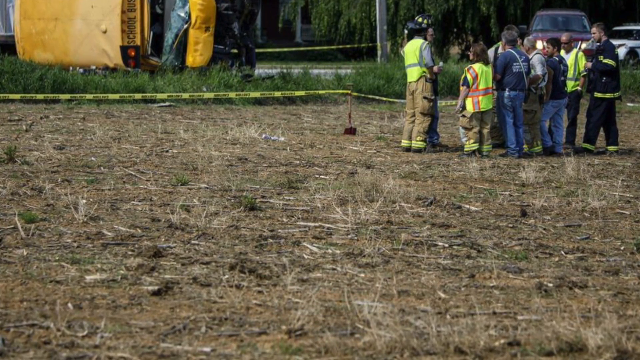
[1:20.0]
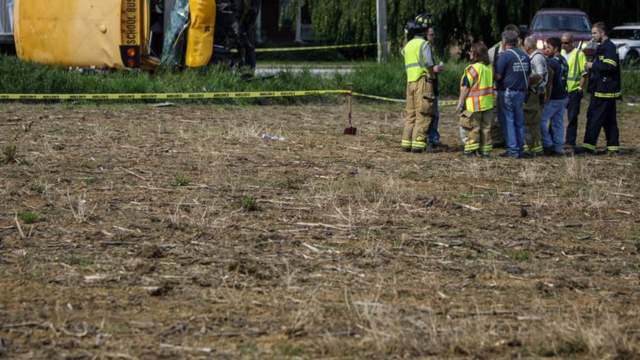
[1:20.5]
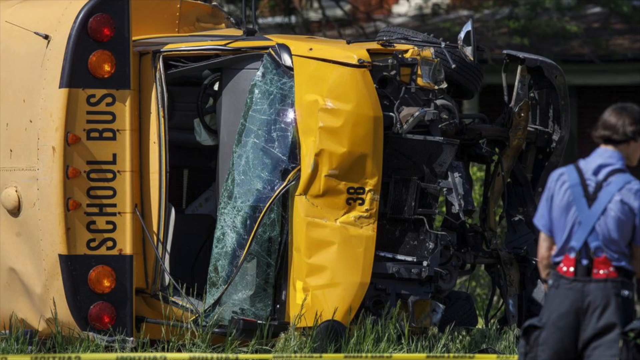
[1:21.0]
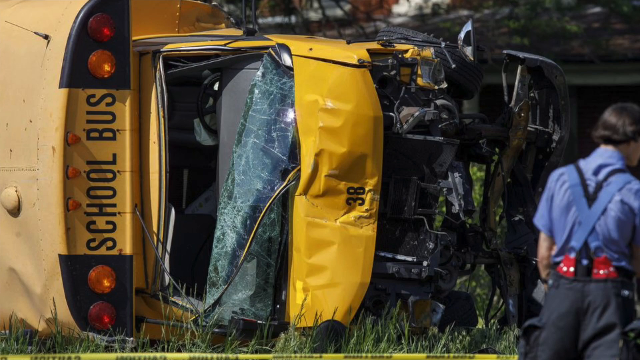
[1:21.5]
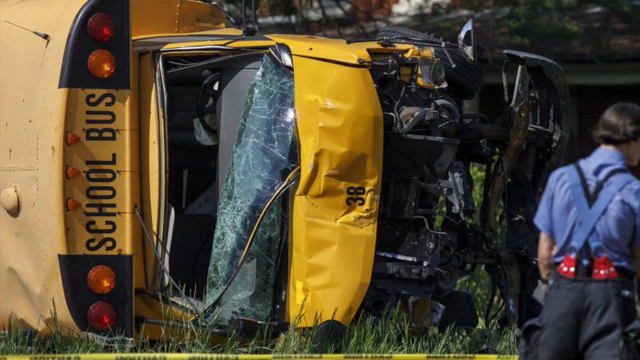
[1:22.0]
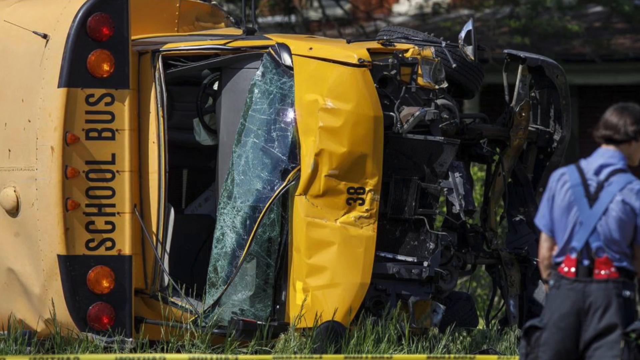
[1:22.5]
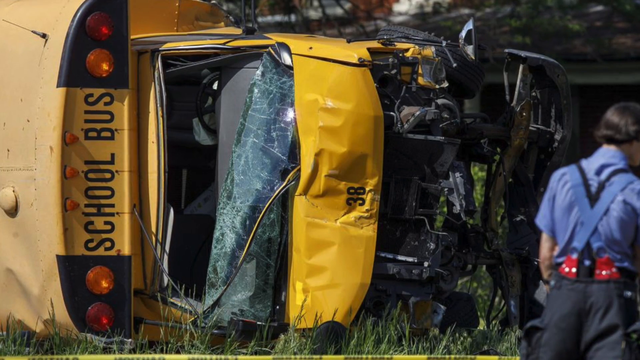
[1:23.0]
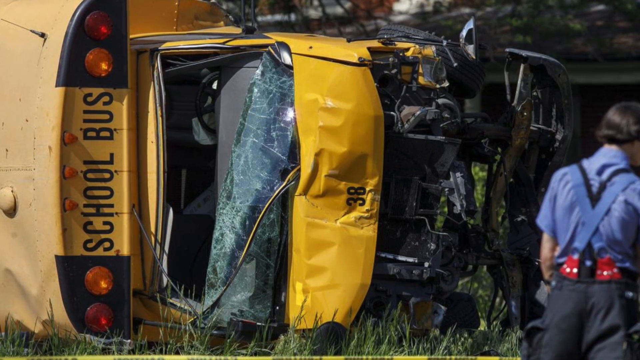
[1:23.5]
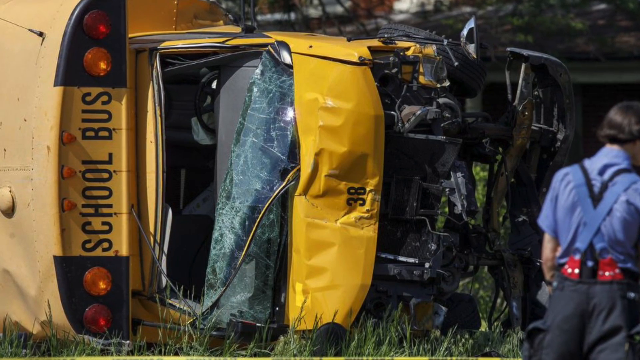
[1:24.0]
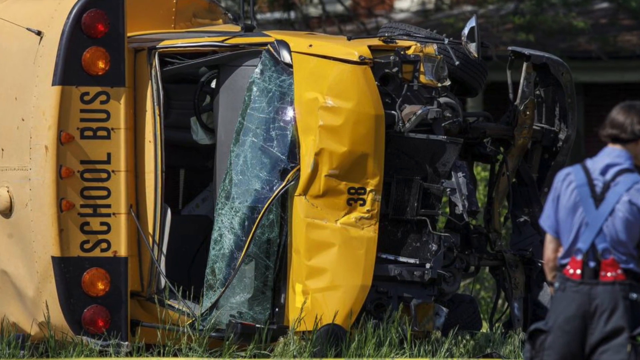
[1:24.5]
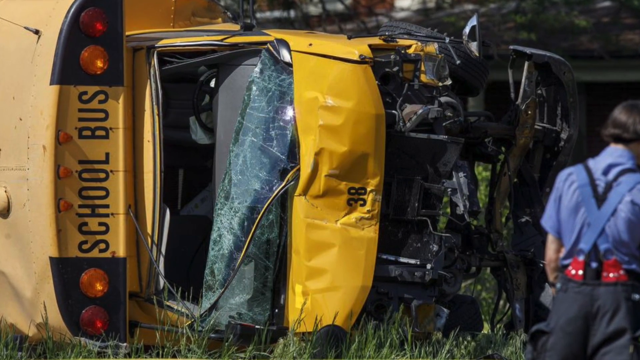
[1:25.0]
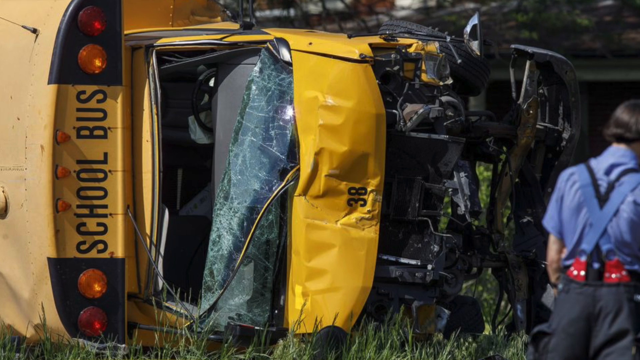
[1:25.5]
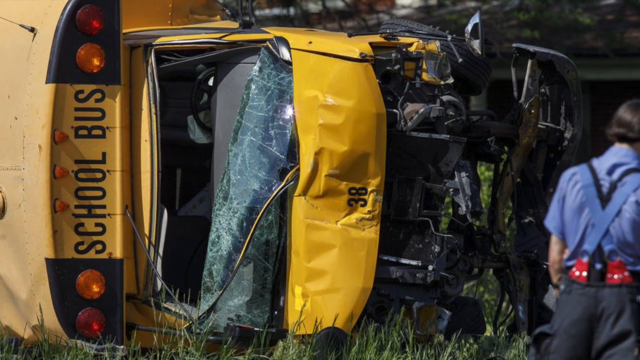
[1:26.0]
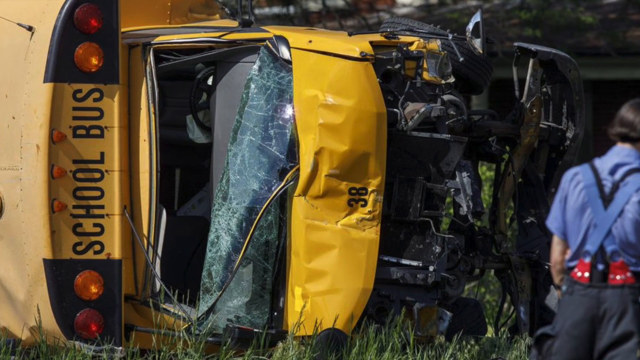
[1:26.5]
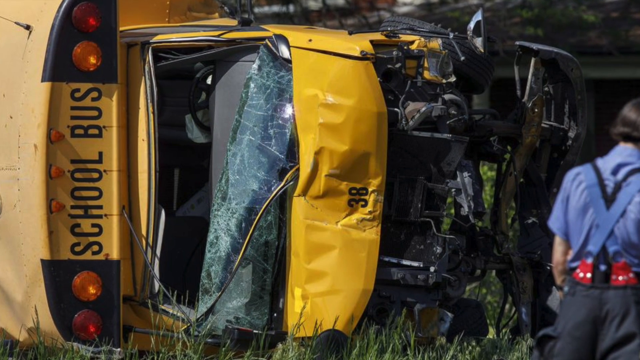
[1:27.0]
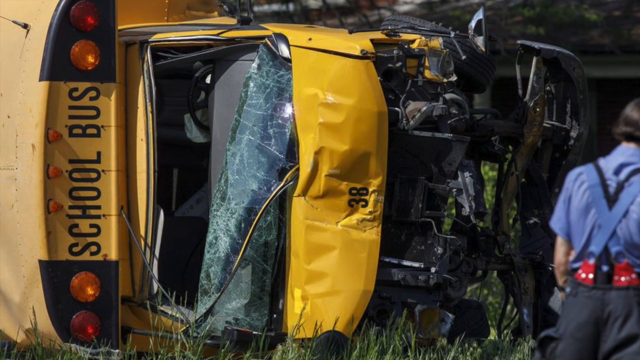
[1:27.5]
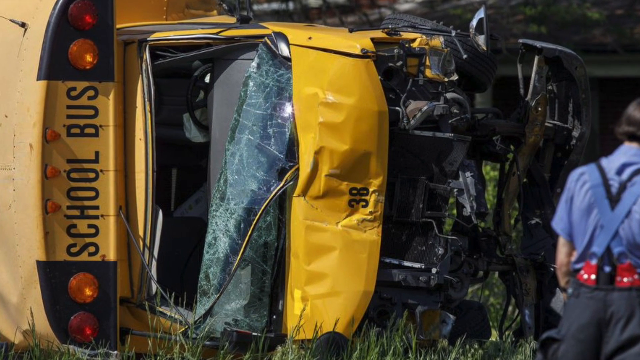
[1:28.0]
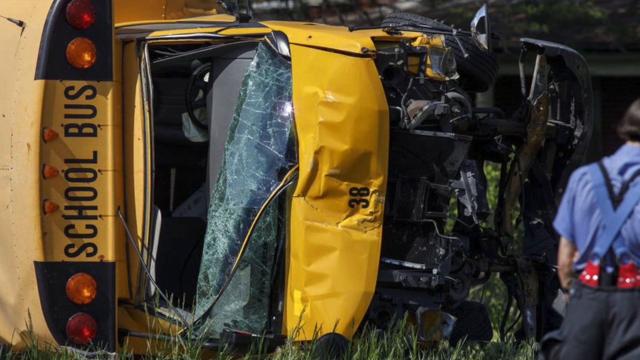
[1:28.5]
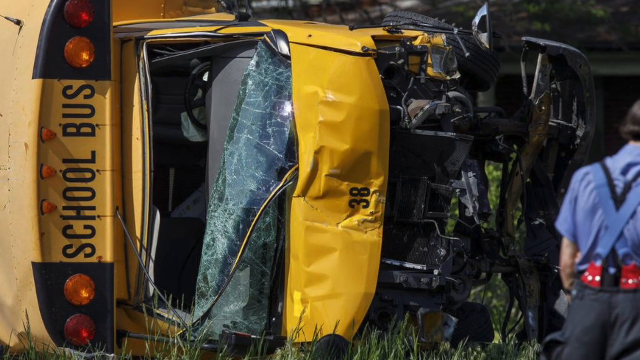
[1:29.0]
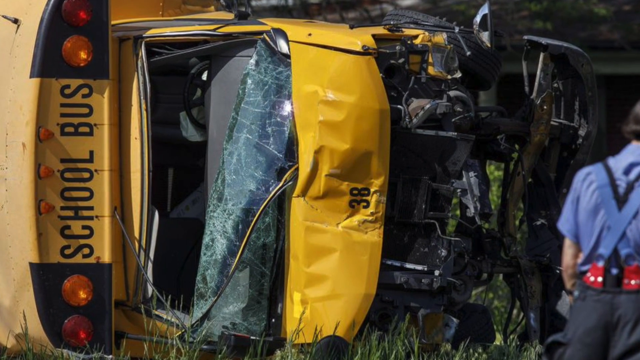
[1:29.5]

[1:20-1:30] The people in the field are shown, then the scene cuts to a close-up of the overturned school bus on its side. There is a lot of damage on the vehicle where something has been broken out, one of the seats has been ripped out and has fallen, and the interior is ripped open.